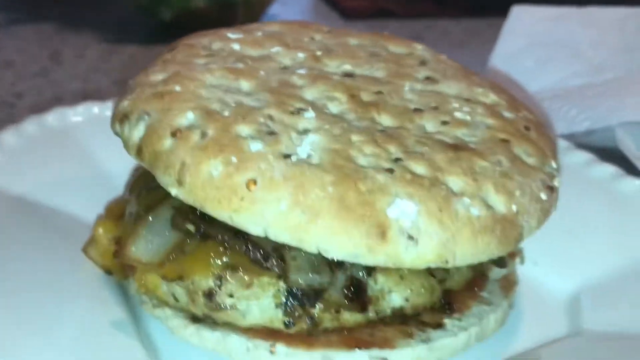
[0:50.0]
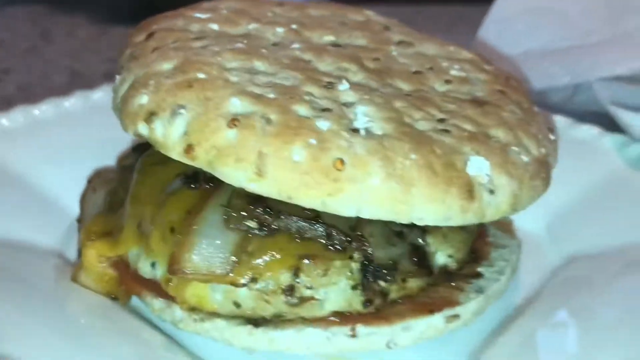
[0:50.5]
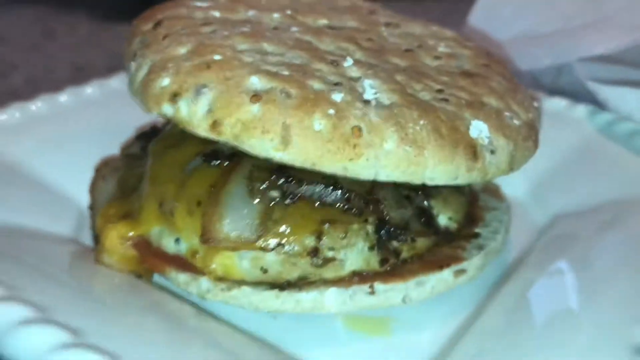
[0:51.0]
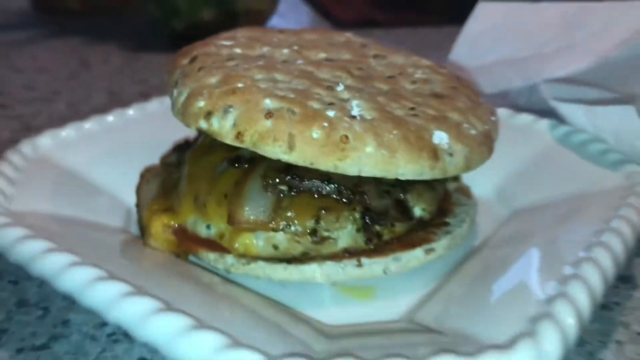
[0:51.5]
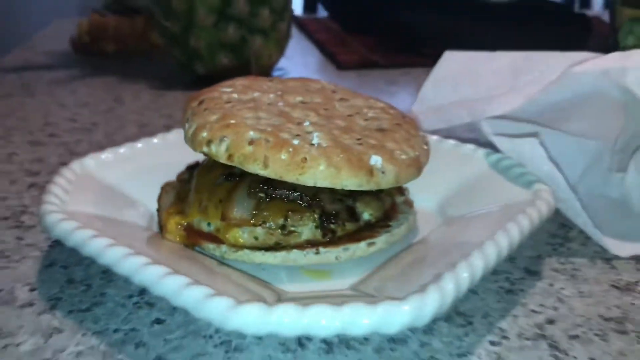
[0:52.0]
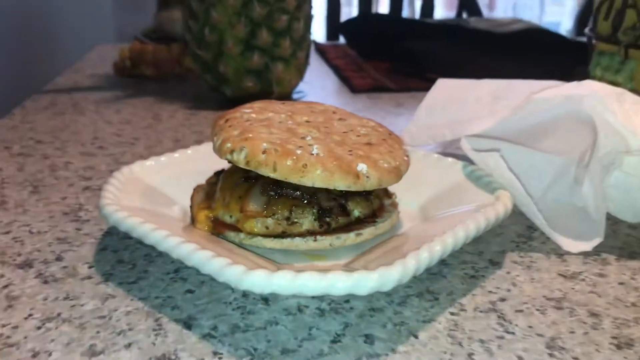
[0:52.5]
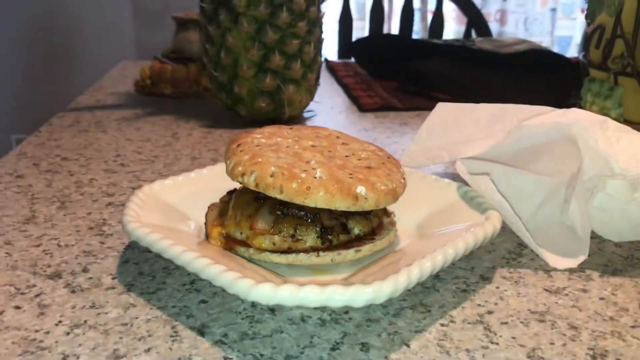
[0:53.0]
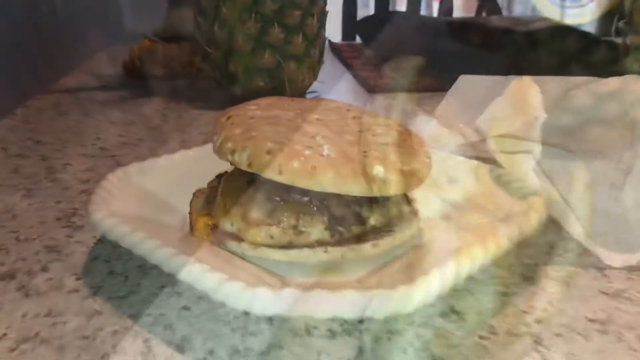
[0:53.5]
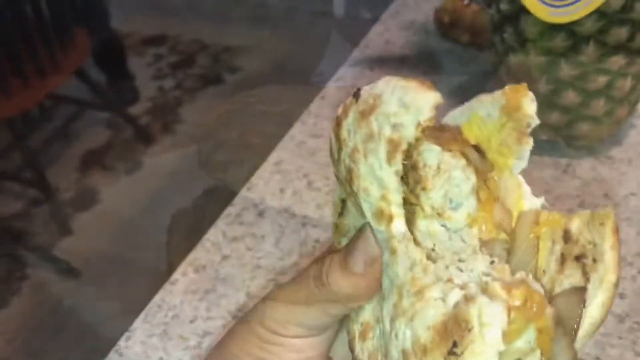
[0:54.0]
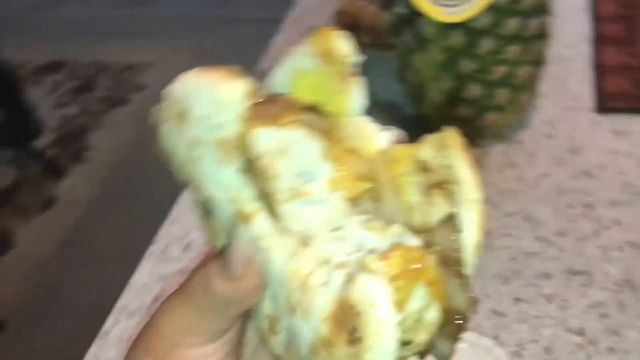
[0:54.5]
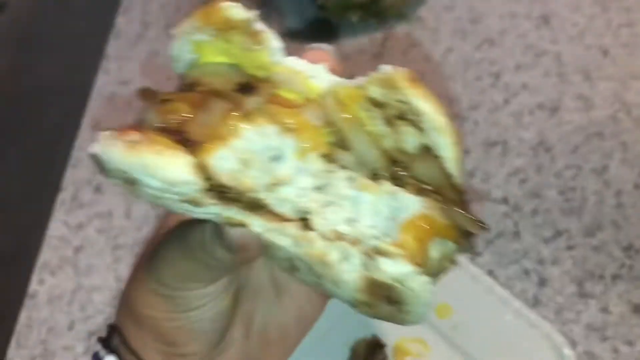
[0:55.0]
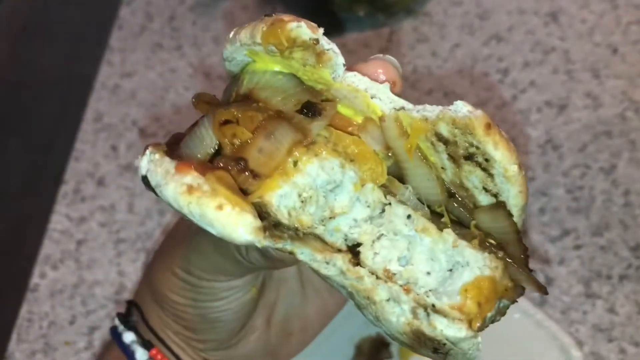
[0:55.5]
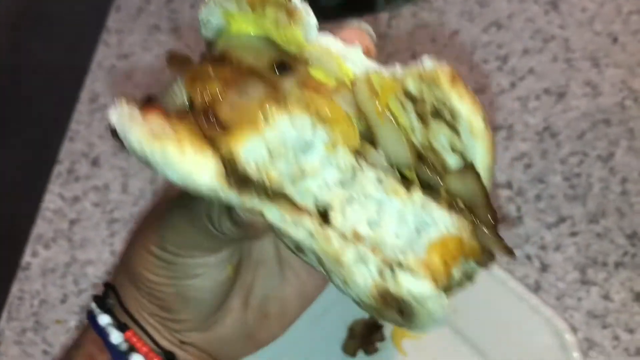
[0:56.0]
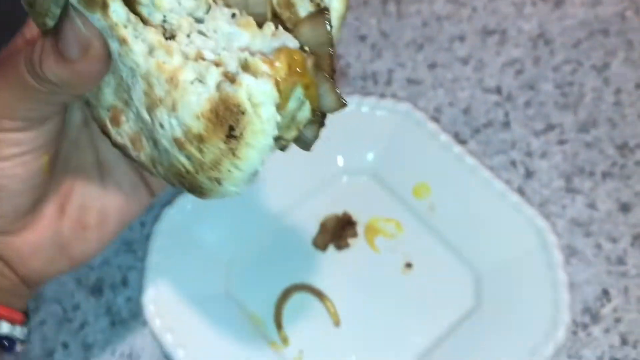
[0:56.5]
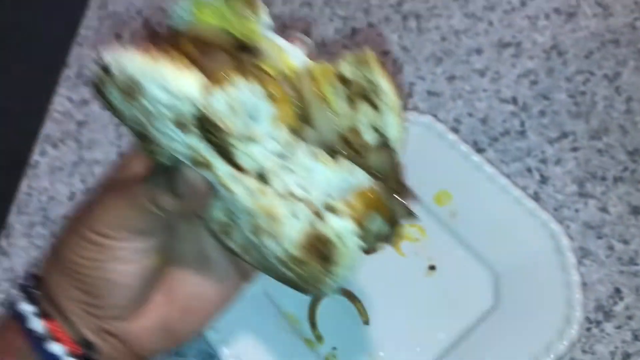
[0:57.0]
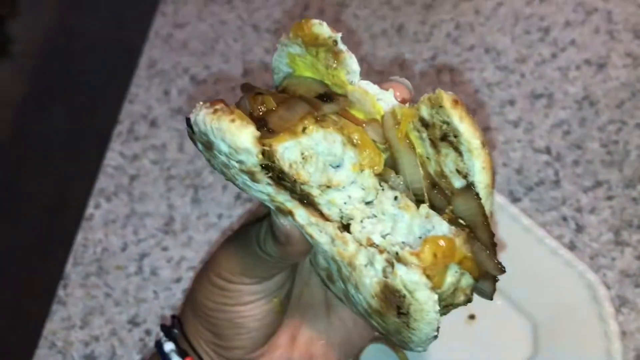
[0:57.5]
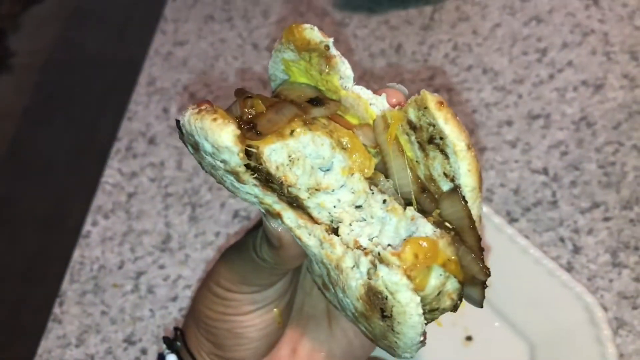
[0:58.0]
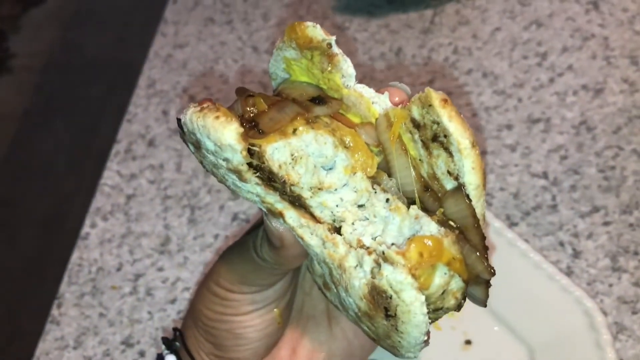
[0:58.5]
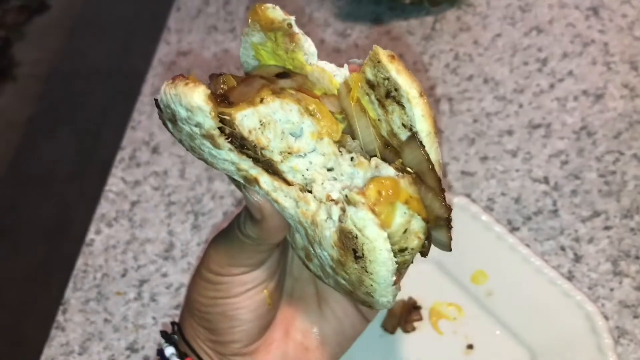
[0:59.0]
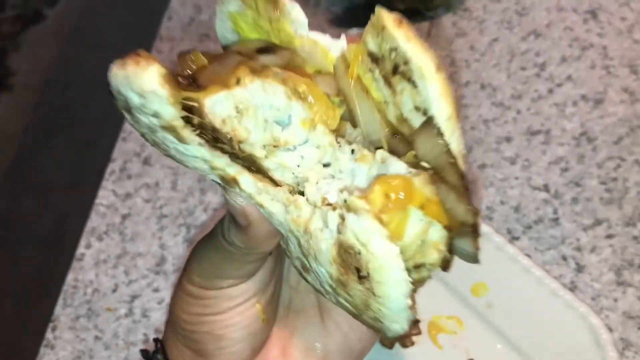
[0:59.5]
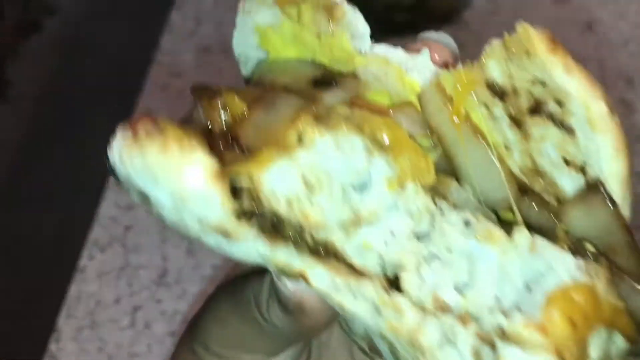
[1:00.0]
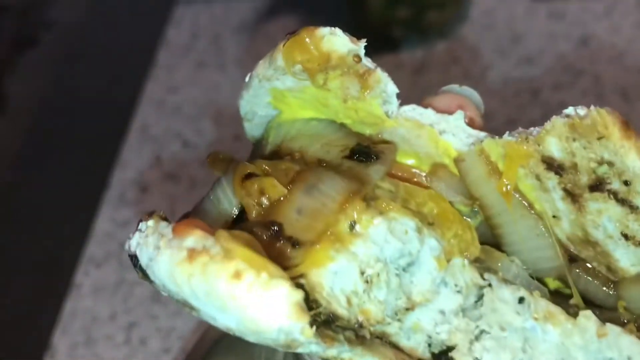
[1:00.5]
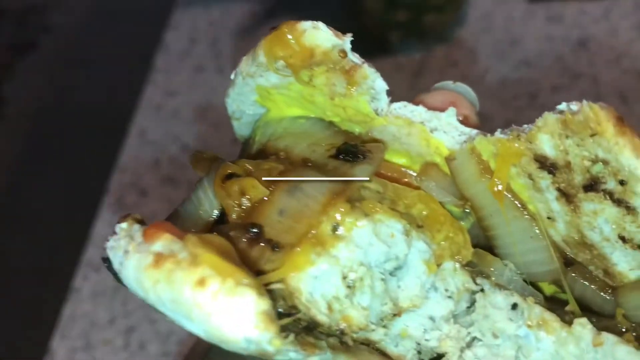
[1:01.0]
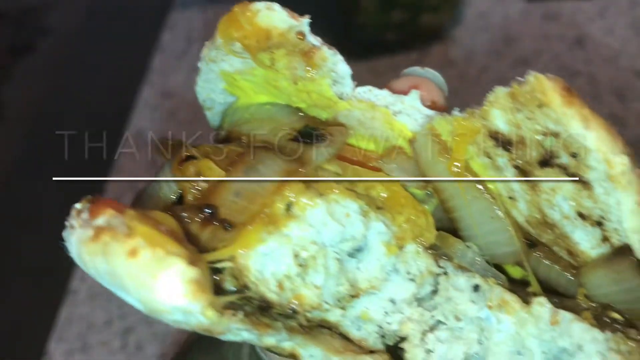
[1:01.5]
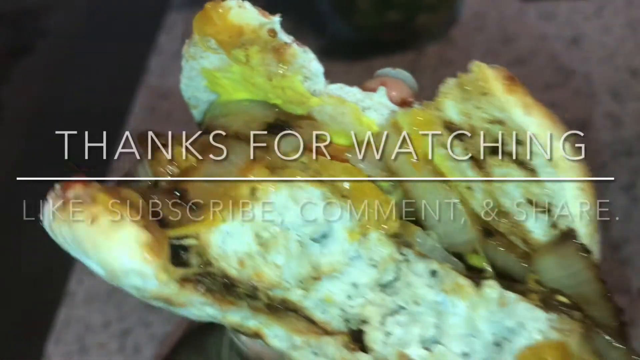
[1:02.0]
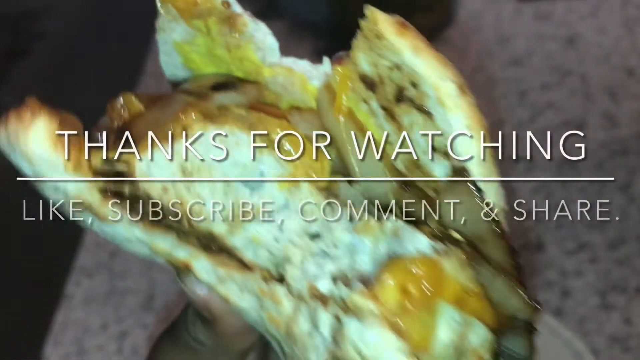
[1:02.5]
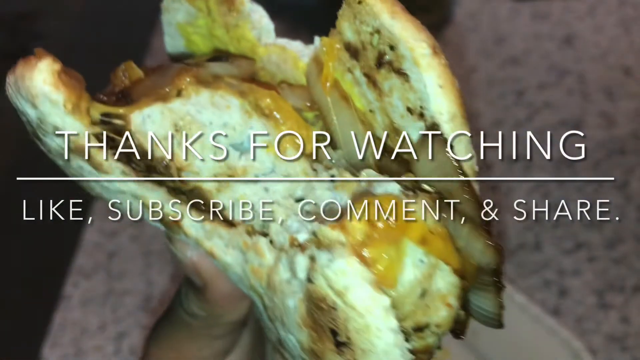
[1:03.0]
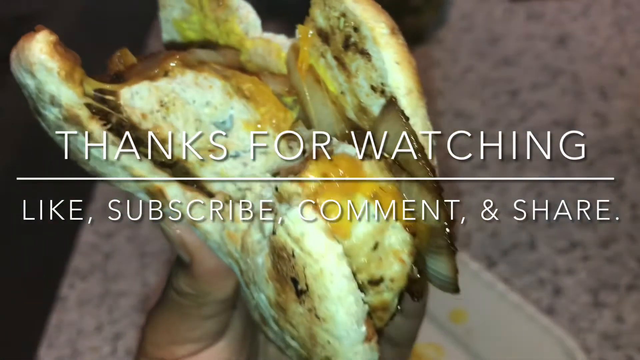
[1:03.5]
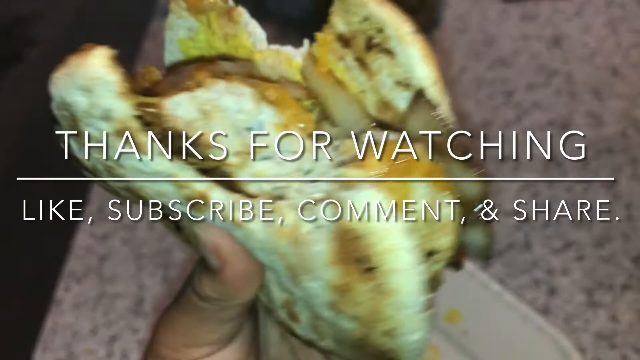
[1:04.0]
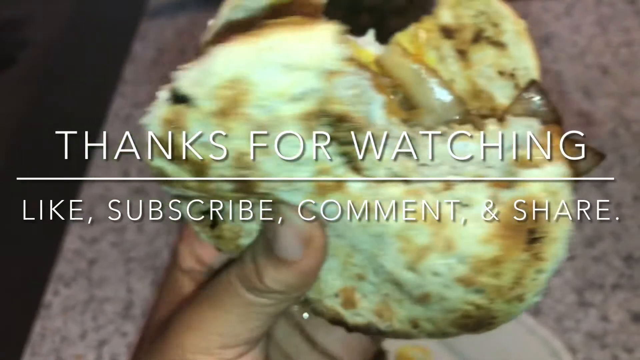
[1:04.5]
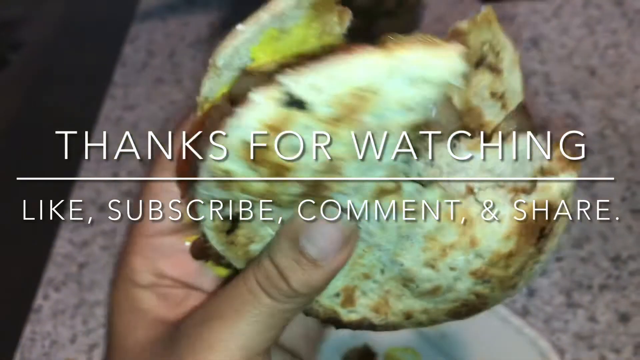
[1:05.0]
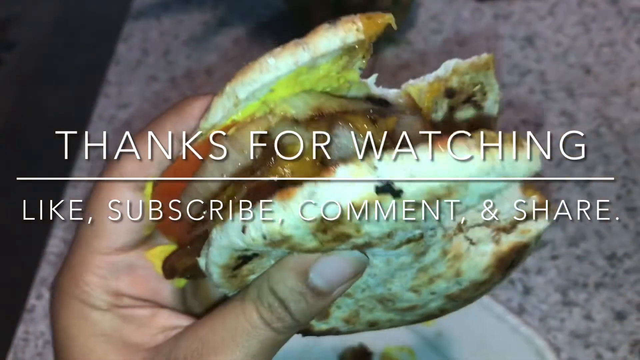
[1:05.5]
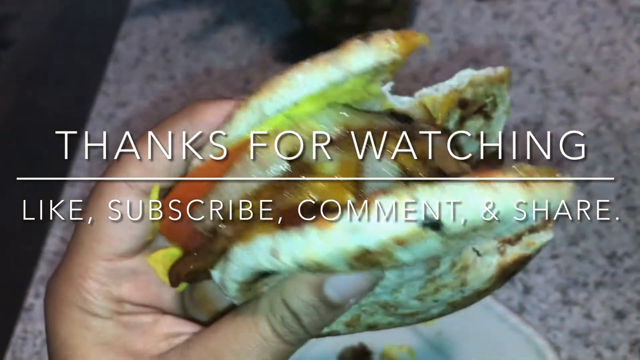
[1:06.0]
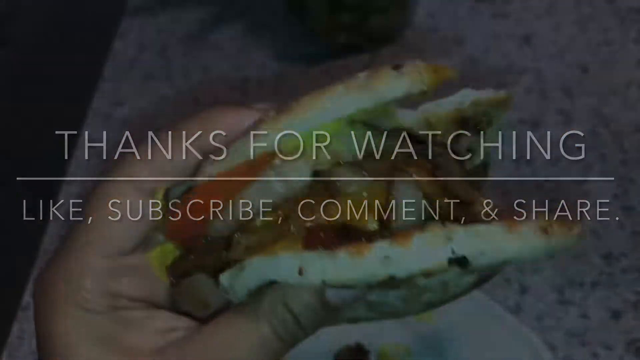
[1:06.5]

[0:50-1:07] The whole sandwich tin is shown all together. The burger is on the white plate on a table that is marbled or has a marble-like design, with a white napkin next to it, and a pineapple is also on the table. The video then transitions to a shot of a hand, which looks like it may be a woman's, holding up the burger, which has been bitten, though the bite itself is not shown. The hand kind of shows the bitten spot to the camera. The meat inside is very white, with a white, fleshy inside, so it is apparently not ground beef and may be a chicken burger.